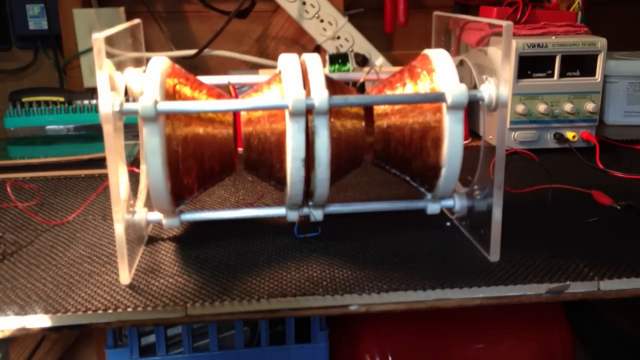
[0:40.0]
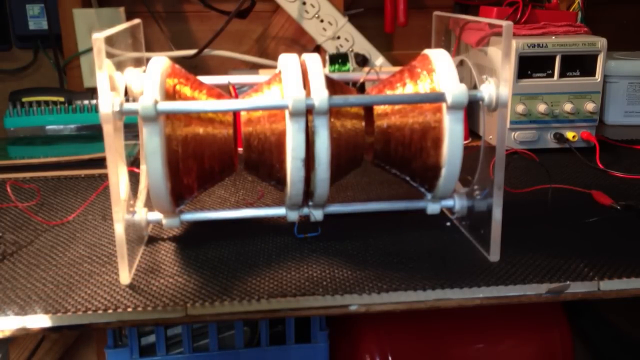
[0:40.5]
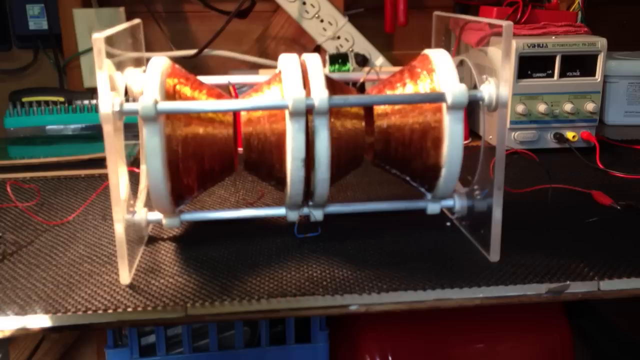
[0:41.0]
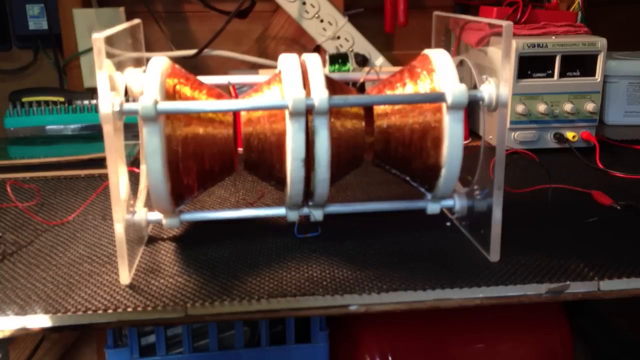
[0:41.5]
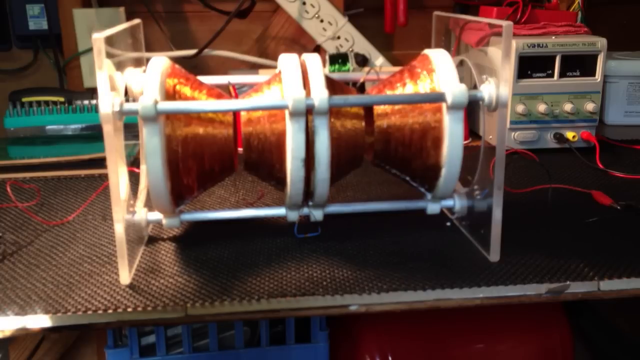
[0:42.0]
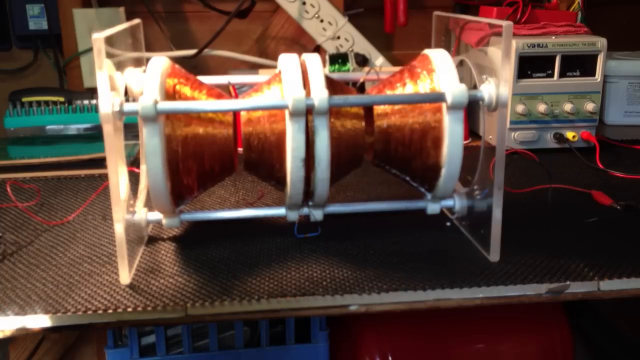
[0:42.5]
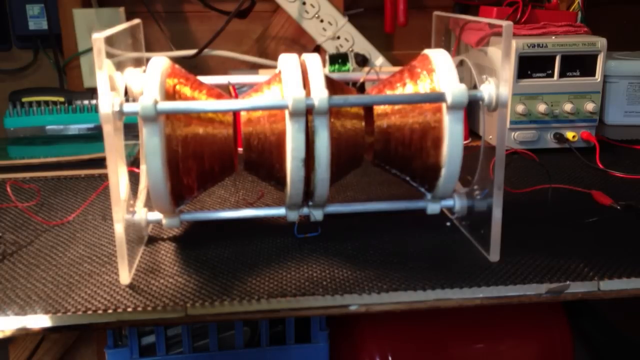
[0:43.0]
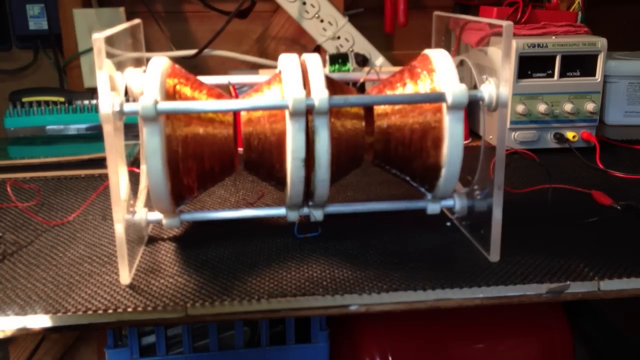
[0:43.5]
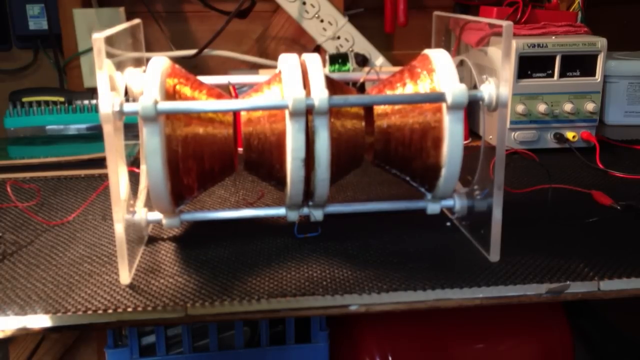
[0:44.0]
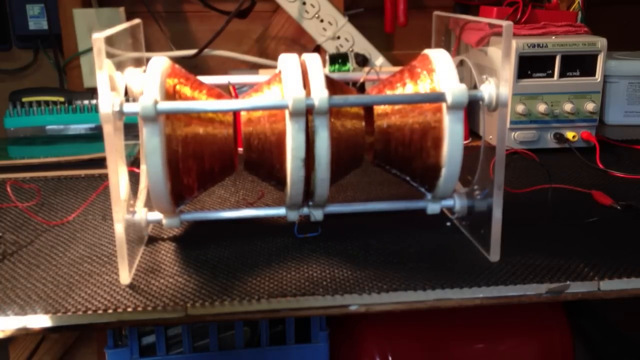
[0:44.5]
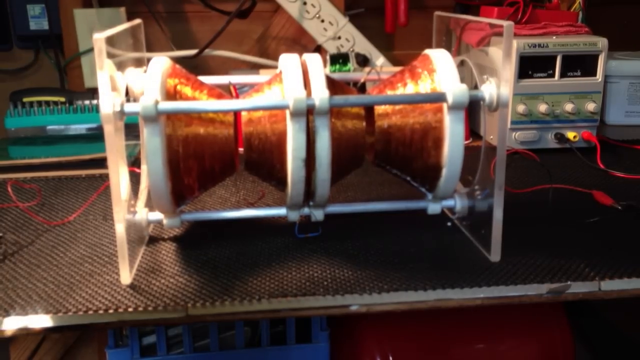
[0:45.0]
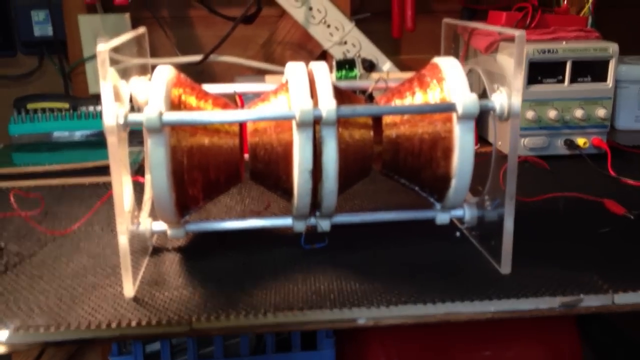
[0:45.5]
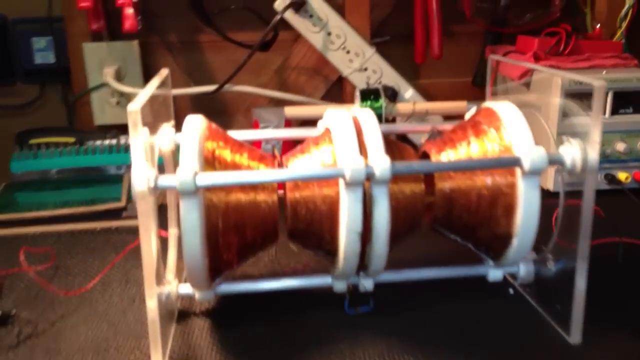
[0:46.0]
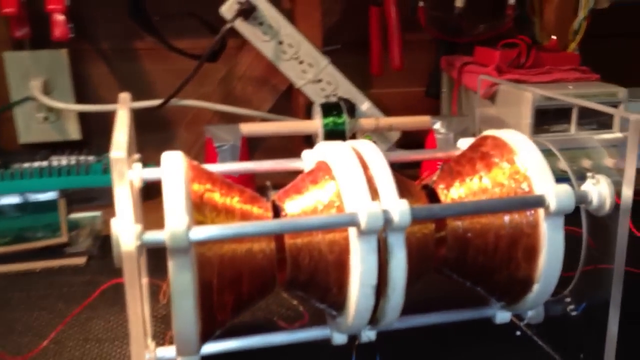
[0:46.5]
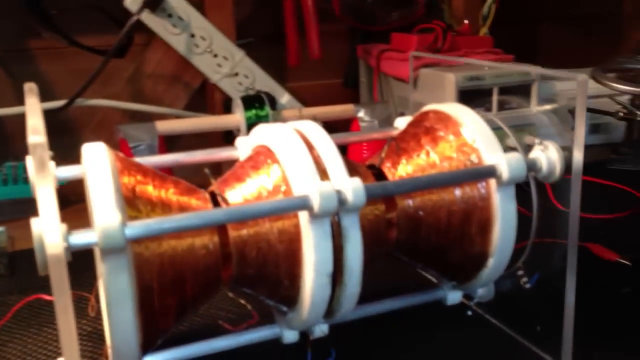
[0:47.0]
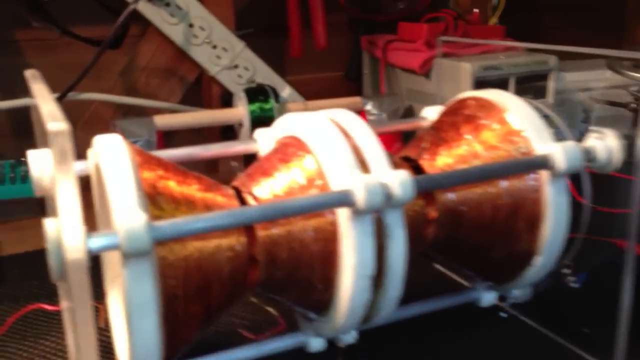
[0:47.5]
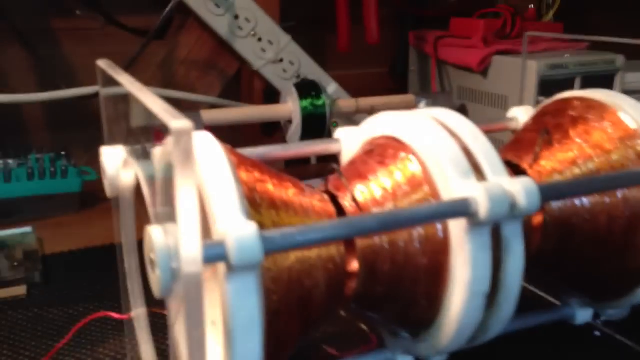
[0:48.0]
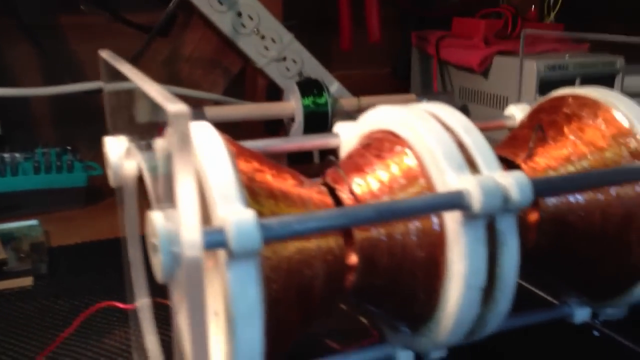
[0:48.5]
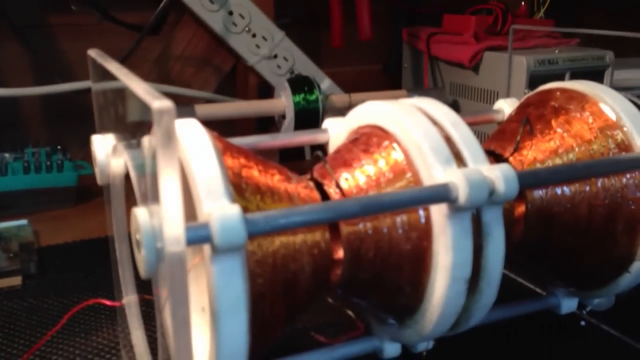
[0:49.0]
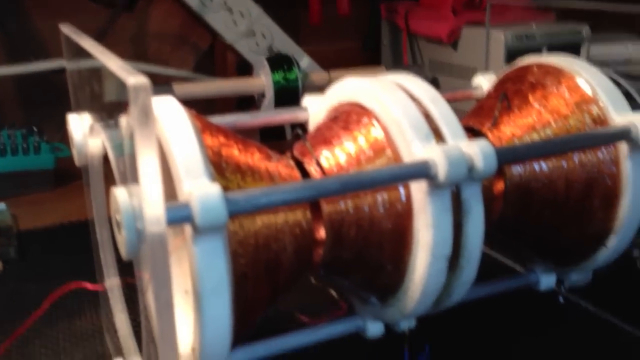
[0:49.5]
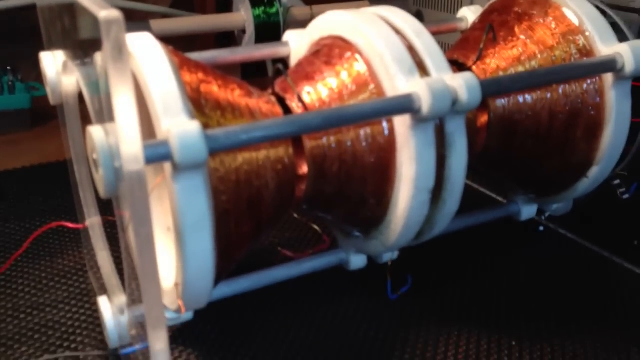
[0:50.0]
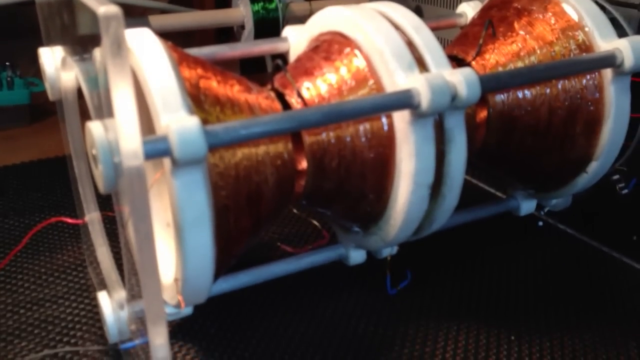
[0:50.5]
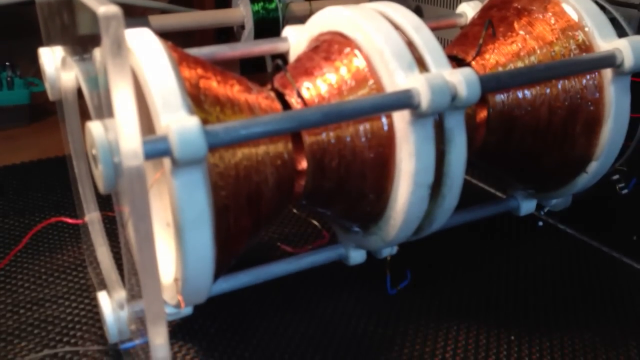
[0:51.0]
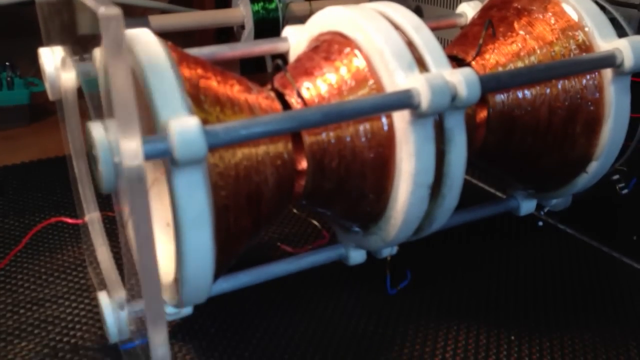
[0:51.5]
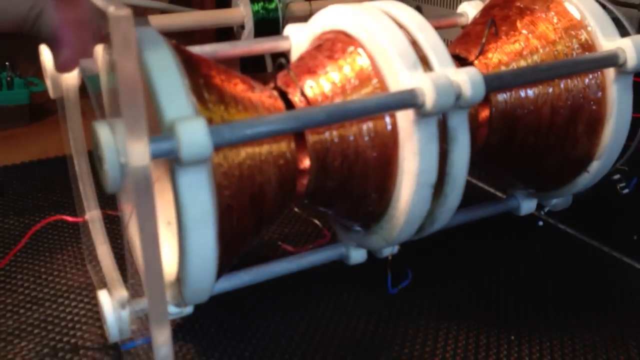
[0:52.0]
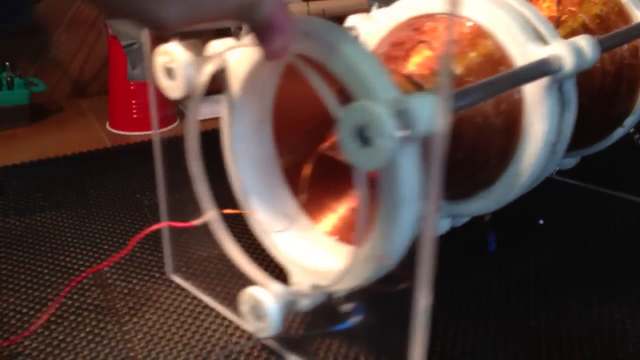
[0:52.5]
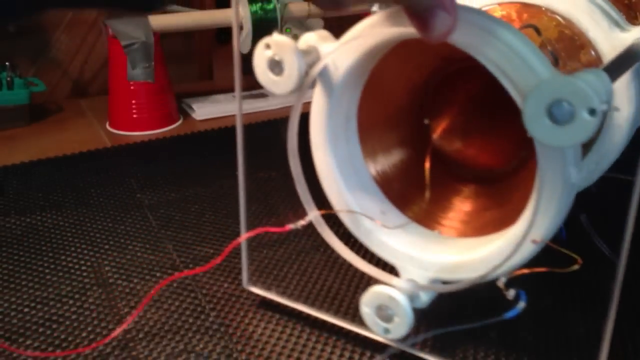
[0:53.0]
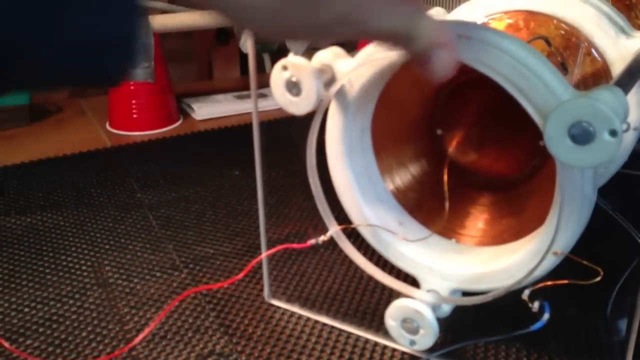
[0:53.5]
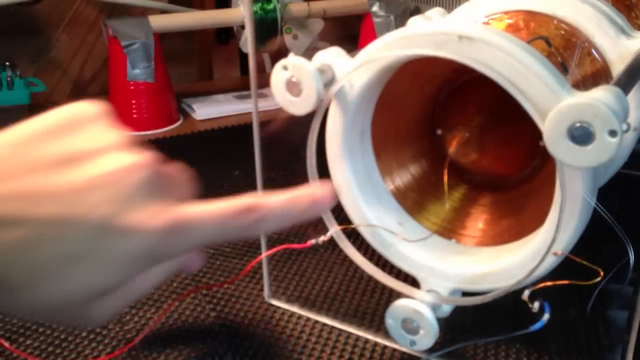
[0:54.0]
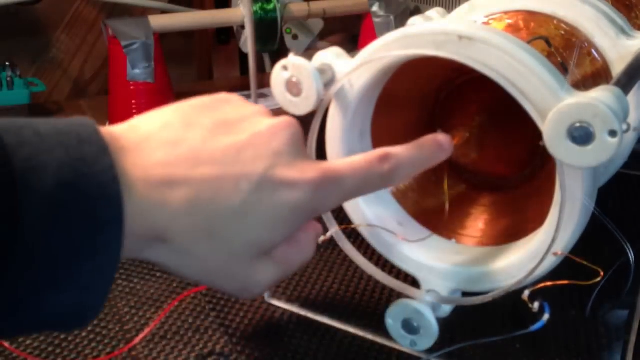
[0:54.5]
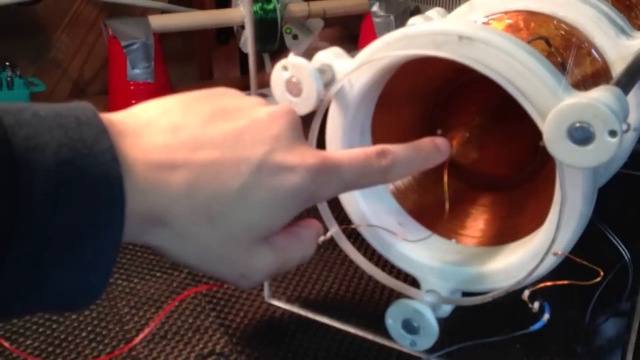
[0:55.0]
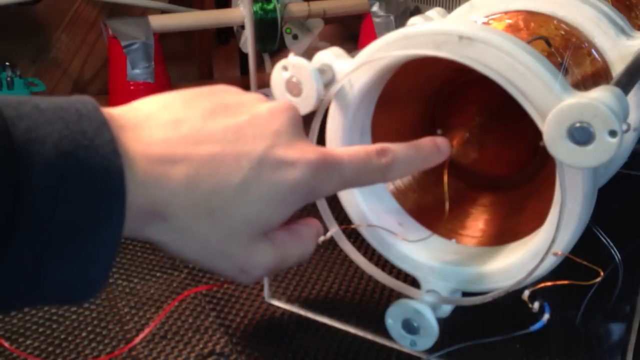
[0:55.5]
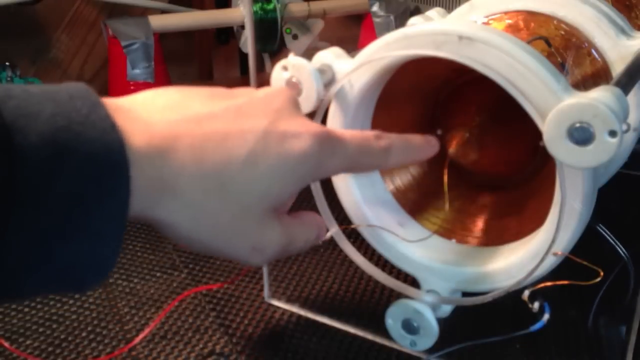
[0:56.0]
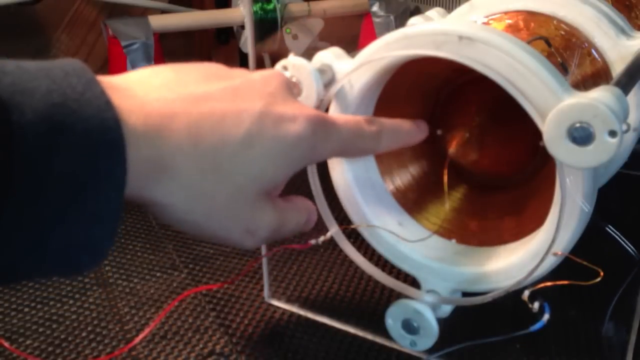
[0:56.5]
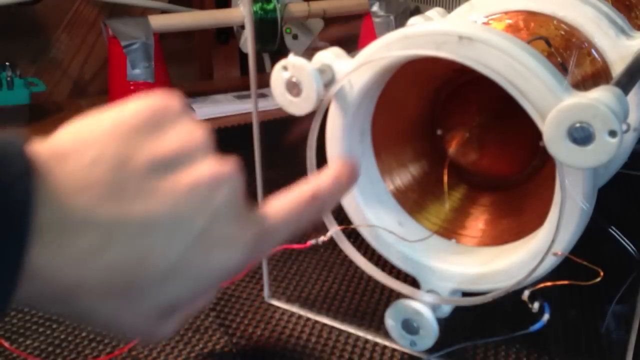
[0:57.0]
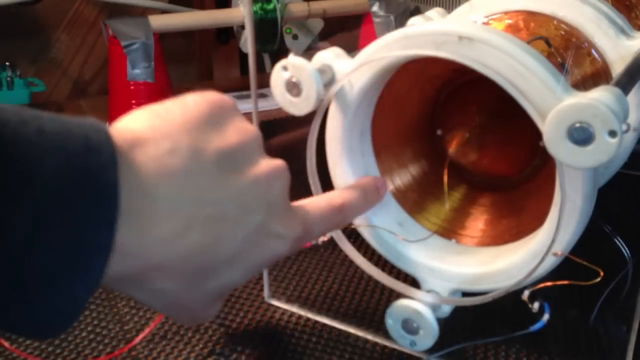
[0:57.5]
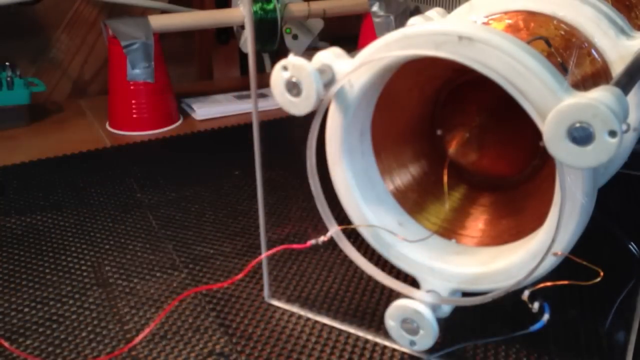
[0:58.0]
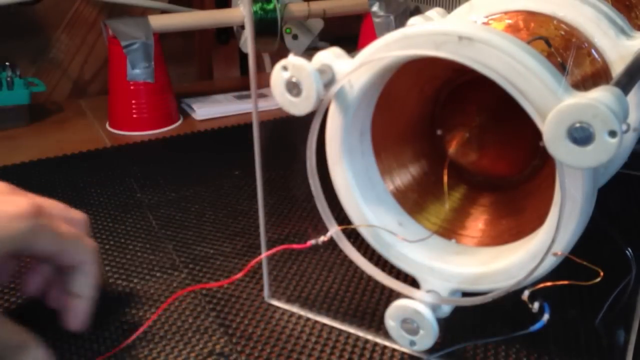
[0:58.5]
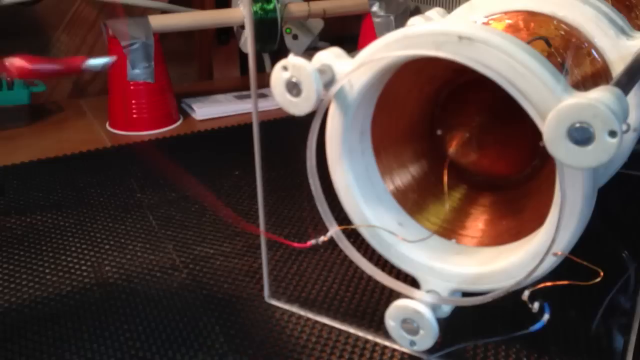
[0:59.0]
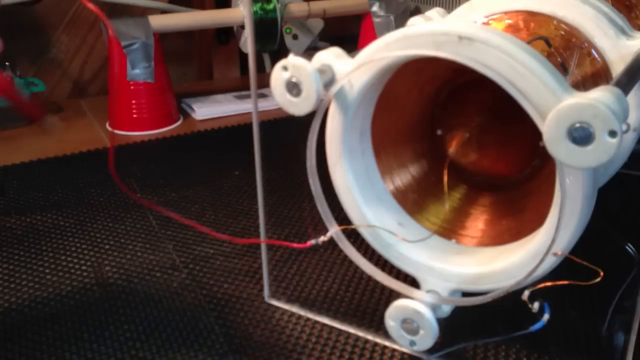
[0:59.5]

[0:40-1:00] The camera is picked up and moves closer to the left-hand side of the device, where an index finger points to the side. The inside is hollow, and cable is wound around it. A single strand of wire with solder on it is connected to a piece of red wire; the person's finger picks up this wire, which is also connected to a clip like a crocodile clip. In the background there are two upturned red plastic cups with a dowel secured by duct tape, and on that is a single reel of green wire. The machine has a perspex glass side, and three metal rods connect the circular plastic outside cylinder. A blue wire is in the bottom right-hand corner of the shot.